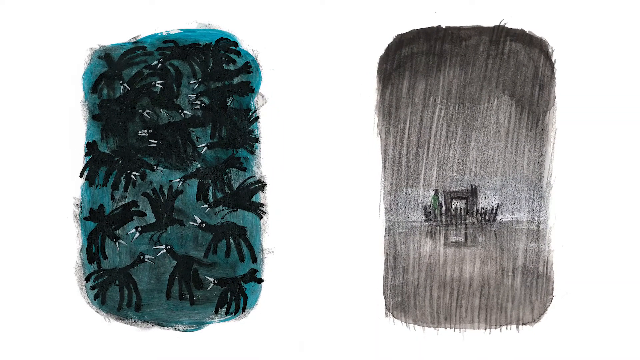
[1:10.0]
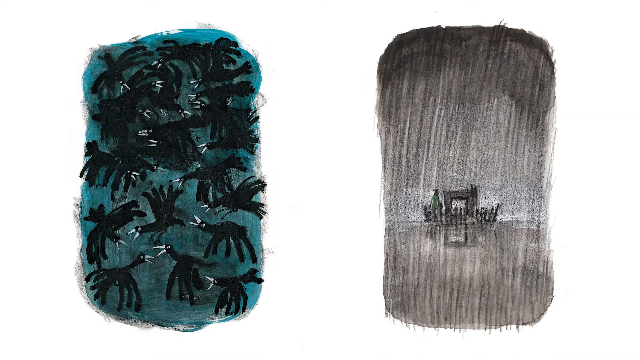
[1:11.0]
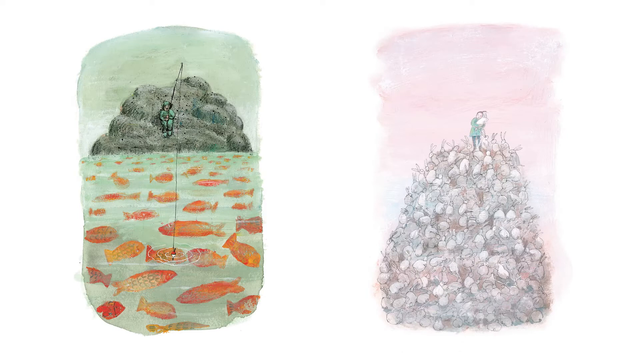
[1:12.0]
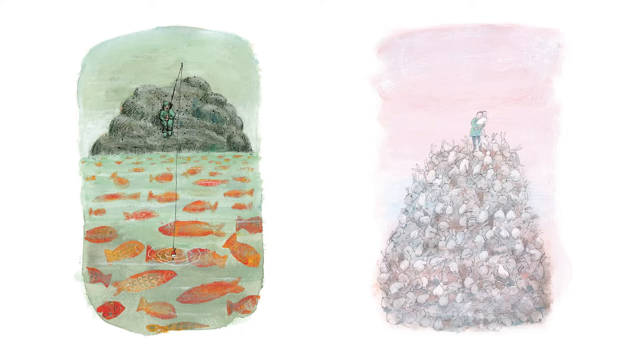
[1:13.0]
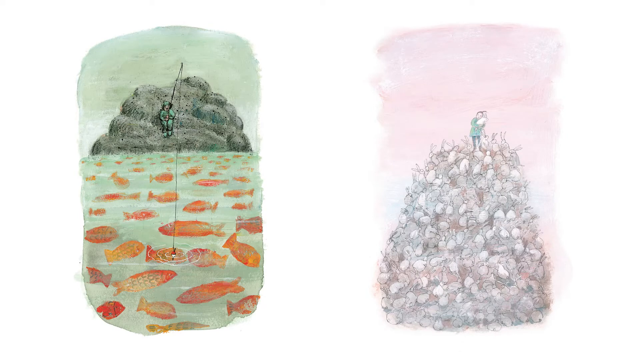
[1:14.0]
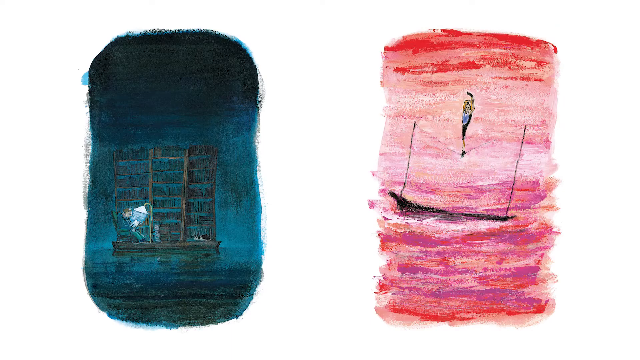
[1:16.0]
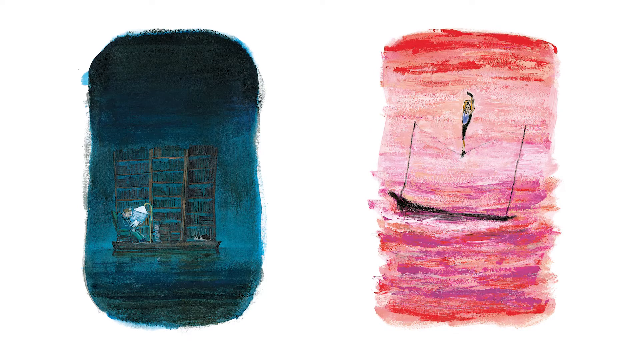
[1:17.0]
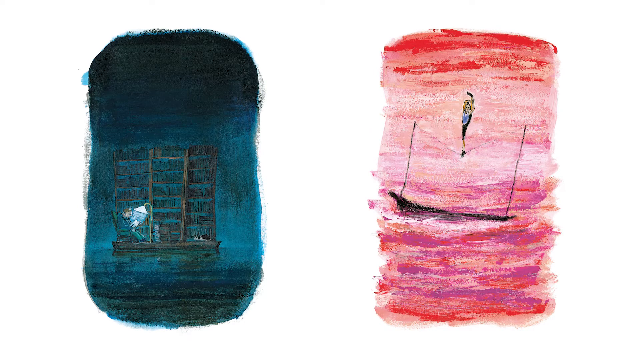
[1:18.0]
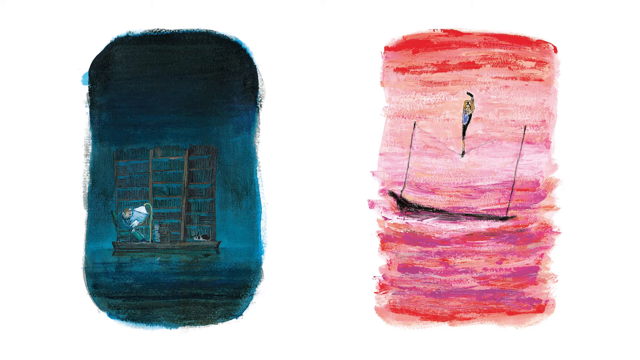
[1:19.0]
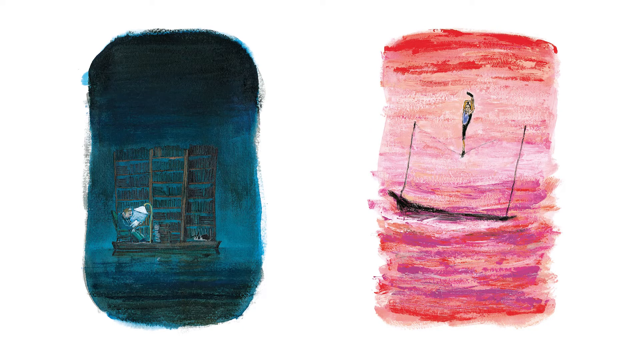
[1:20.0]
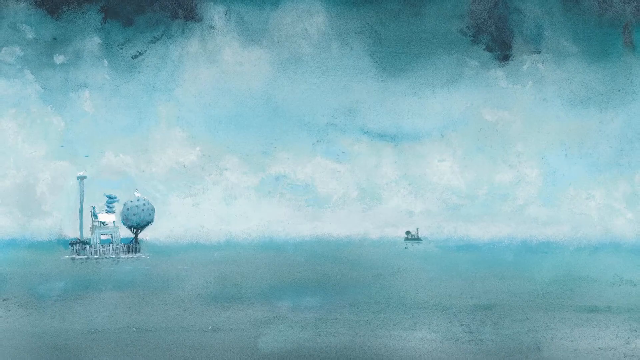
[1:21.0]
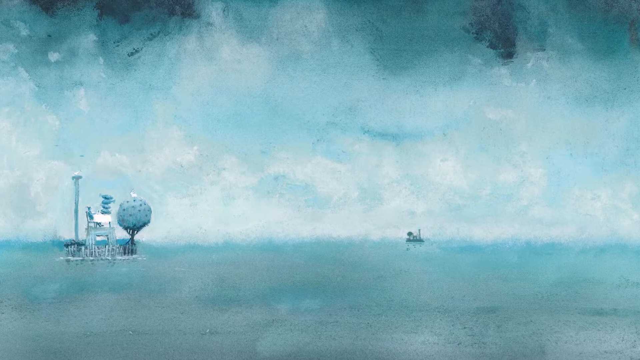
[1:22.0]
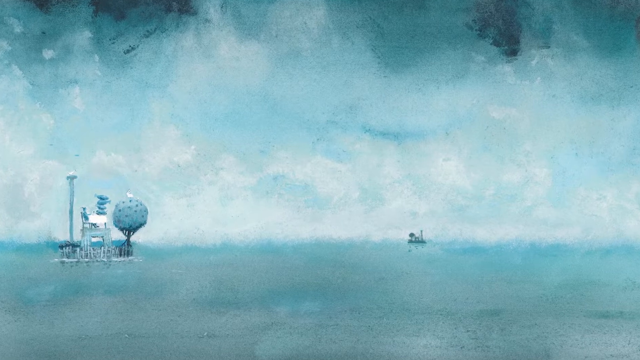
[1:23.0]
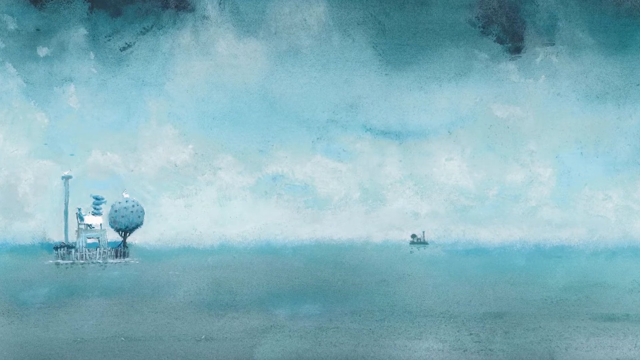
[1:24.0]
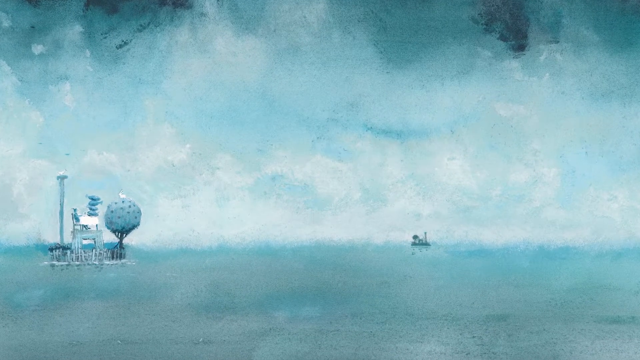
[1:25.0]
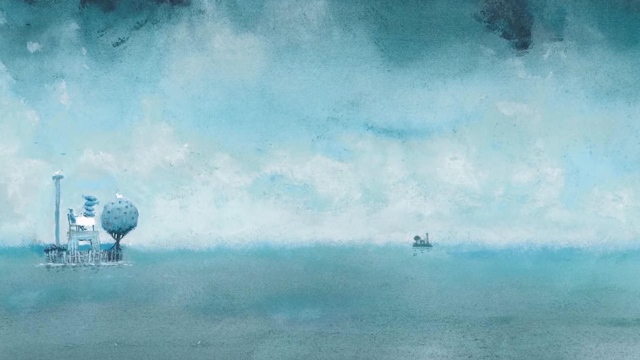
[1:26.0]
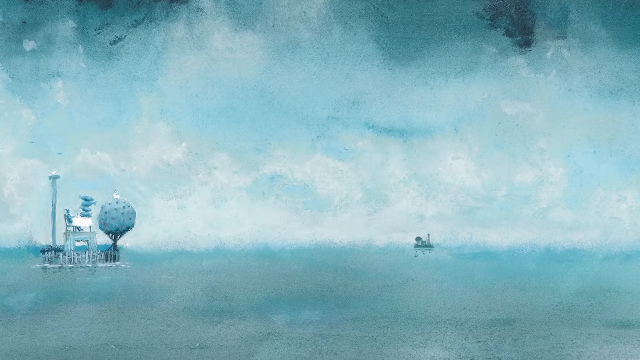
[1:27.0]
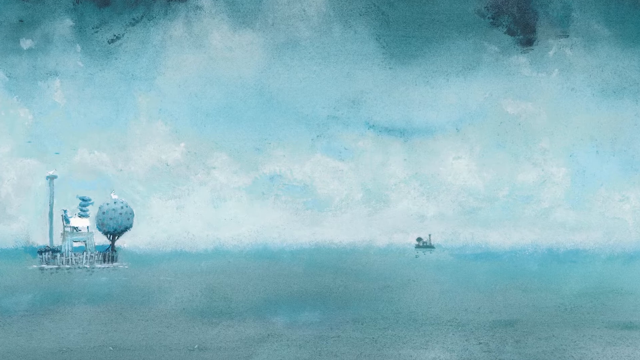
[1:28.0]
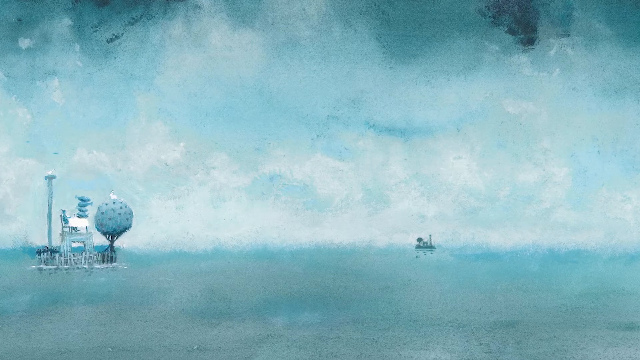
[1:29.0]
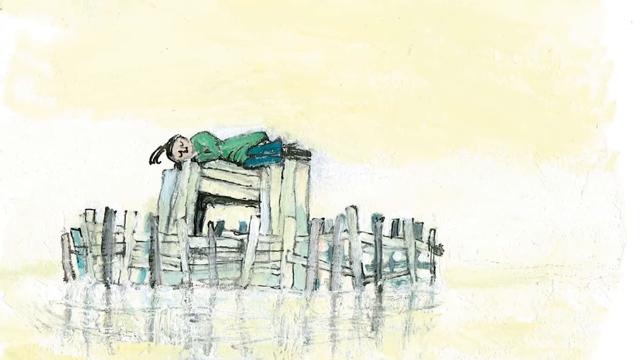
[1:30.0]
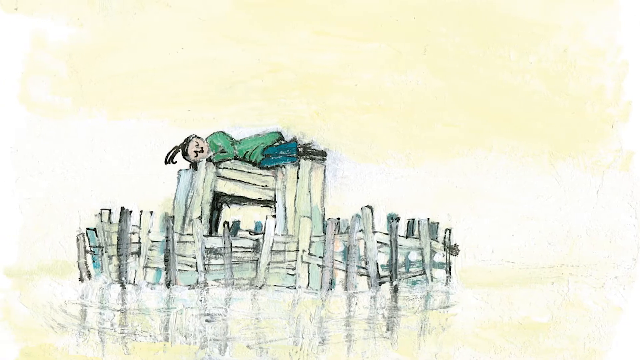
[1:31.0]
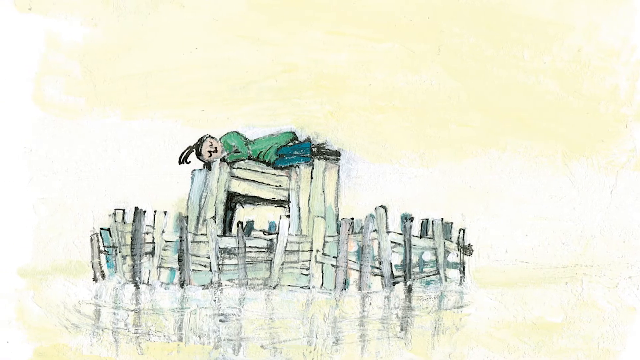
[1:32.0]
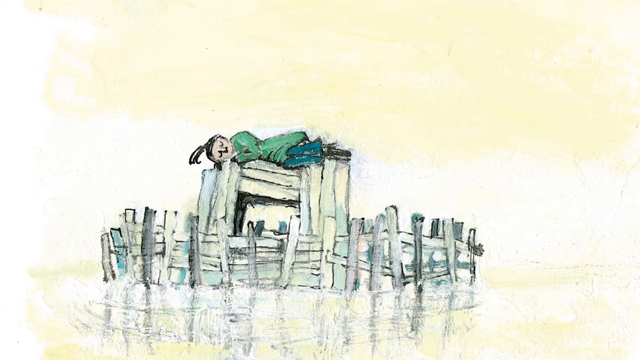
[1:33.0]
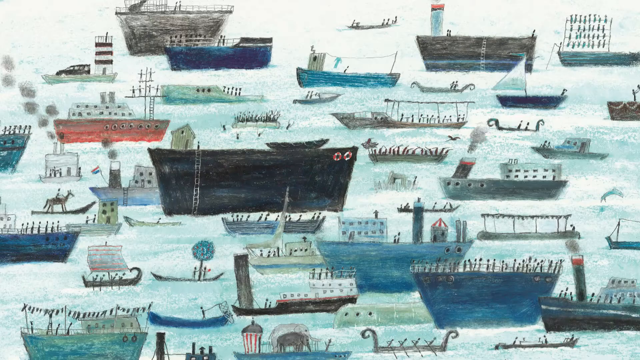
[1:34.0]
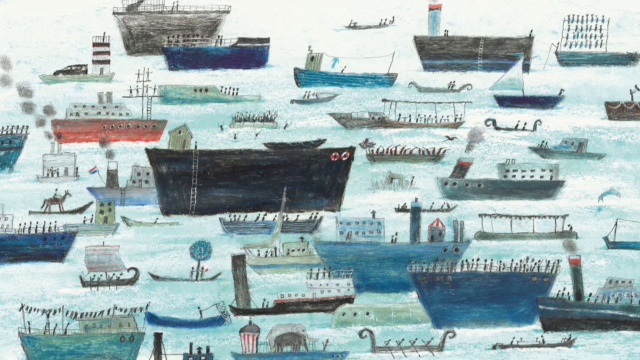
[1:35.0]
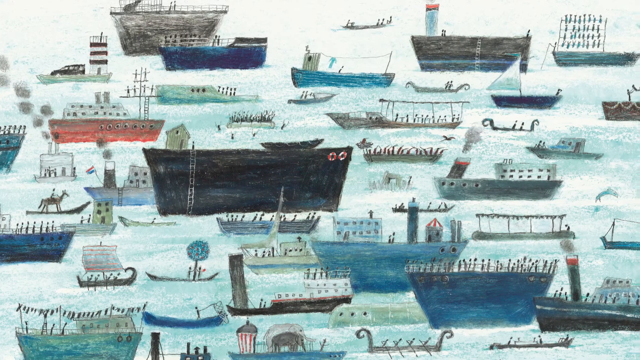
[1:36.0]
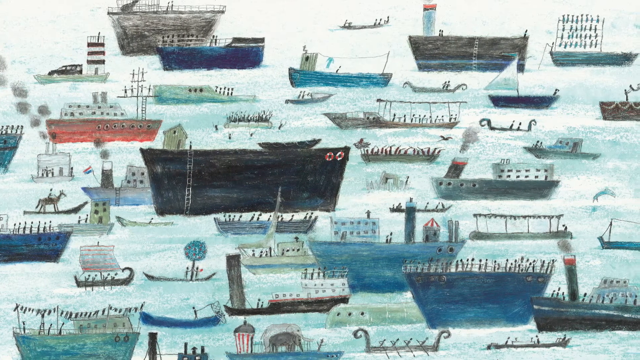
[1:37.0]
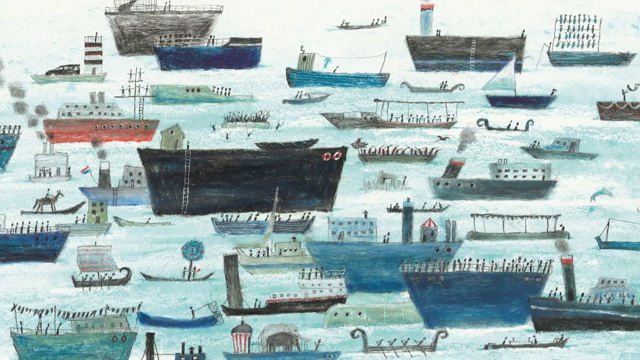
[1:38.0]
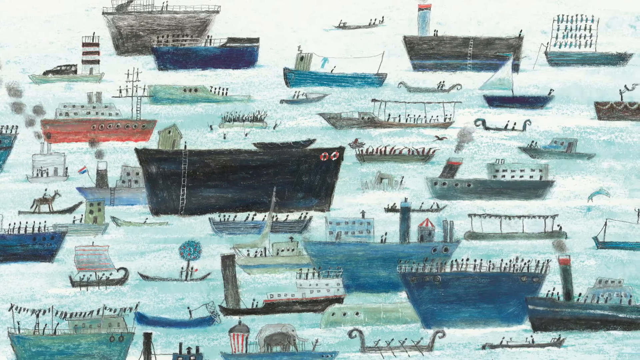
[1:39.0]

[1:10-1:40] Two images are shown. On the left, a fisherman fishes from what looks like a large boulder; the water below him is somewhat green, with many goldfish swimming all around, done in an almost cartoonish way. On the right, a massive pile of rabbits has a woman at the very top holding a rabbit; this one is done in somewhat pastel colours and also has a vaguely cartoon look. The next scene shows a gentleman sitting in a chair reading in a very dark library, with just one little light shining on him. The image on the right, done in many pinks and reds, shows a person on a tightrope; they appear to be on a little canoe with a tightrope on it, and they have their leg pulled up over their head like a contortionist. The next scene, done in a lot of blue watercolour, shows the little ramshackle houseboat with a large column on it and a white bird. The girl sits on top with a table and chairs, and there is an apple tree with a little rabbit on top of it. Next, an image shows the girl sleeping on the very top of her little houseboat. Then an image shows many ships and sailors sailing in different directions; all the ships look different, and many people are on a voyage.